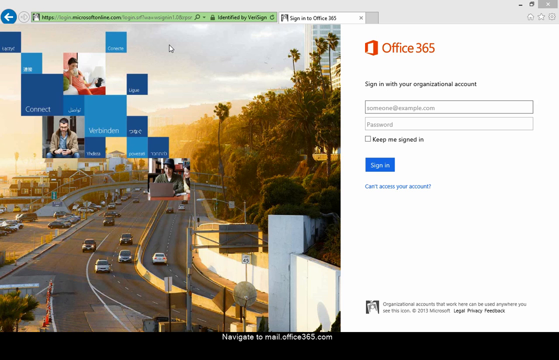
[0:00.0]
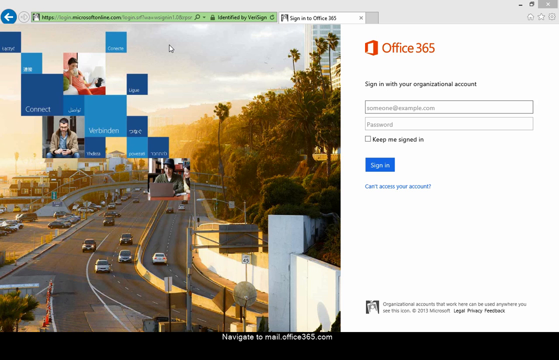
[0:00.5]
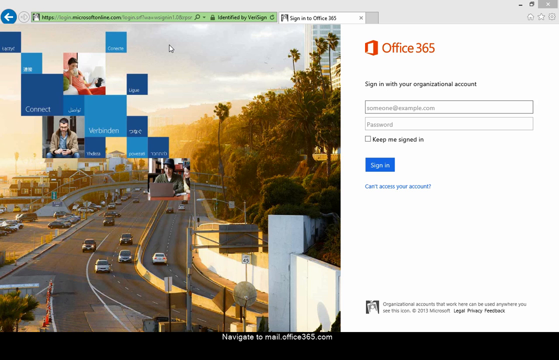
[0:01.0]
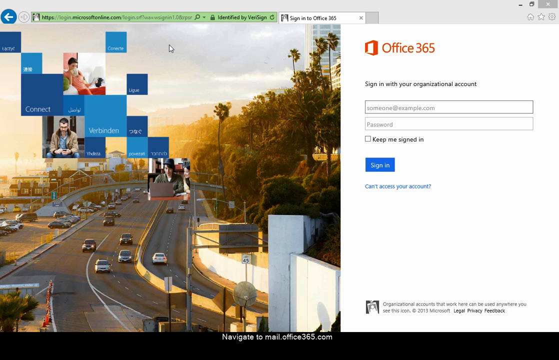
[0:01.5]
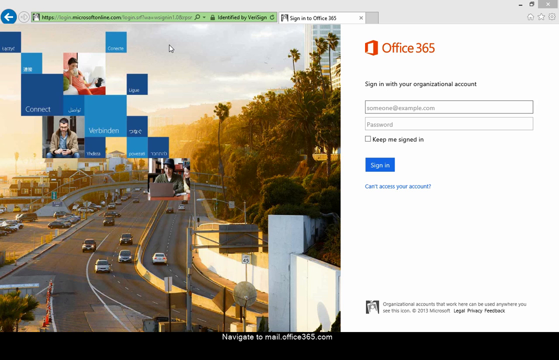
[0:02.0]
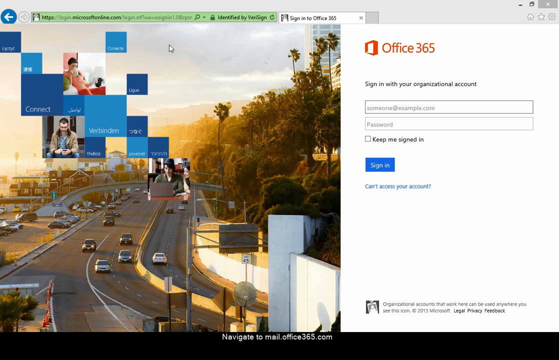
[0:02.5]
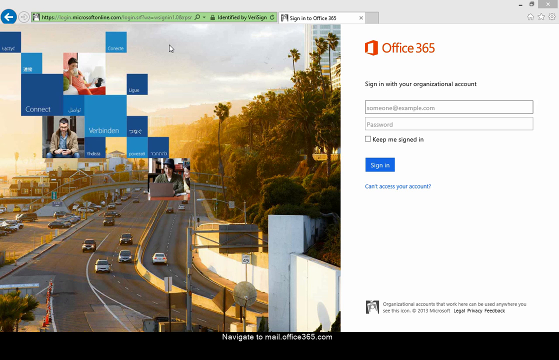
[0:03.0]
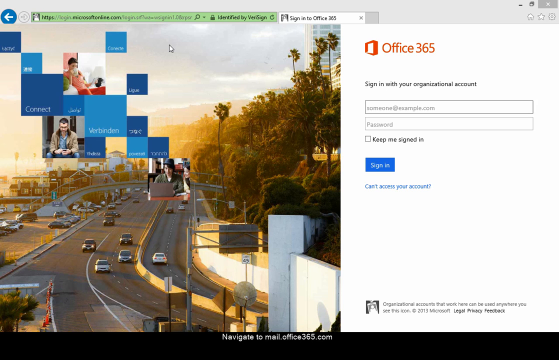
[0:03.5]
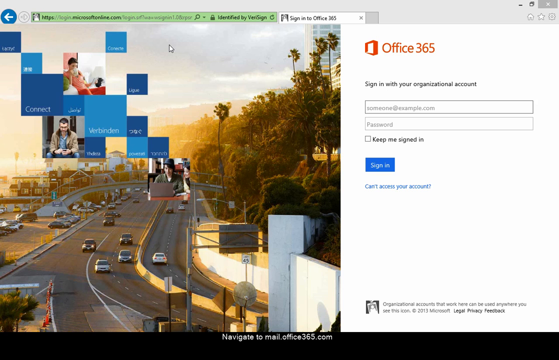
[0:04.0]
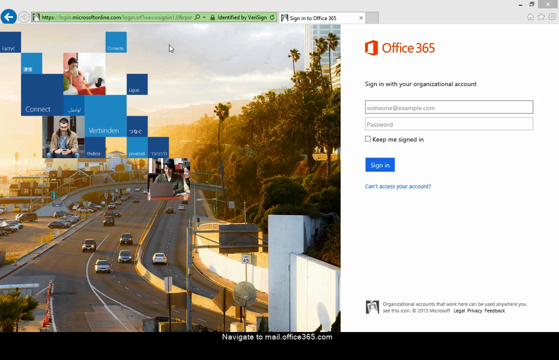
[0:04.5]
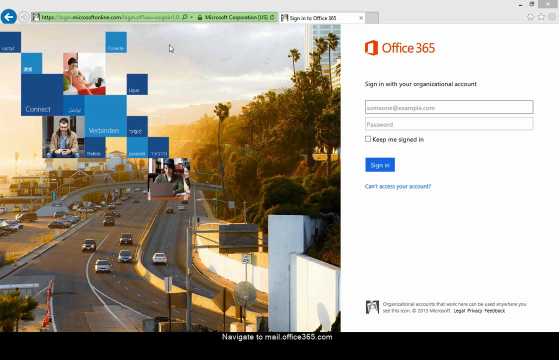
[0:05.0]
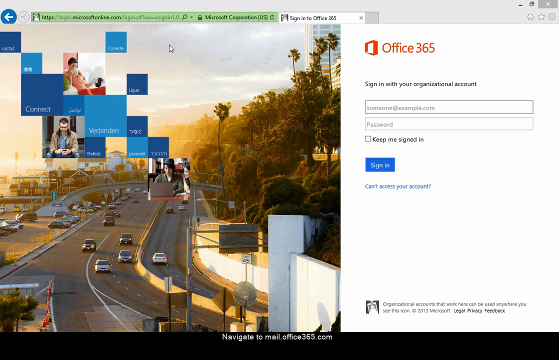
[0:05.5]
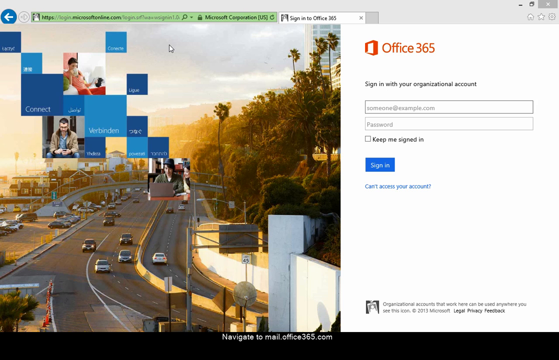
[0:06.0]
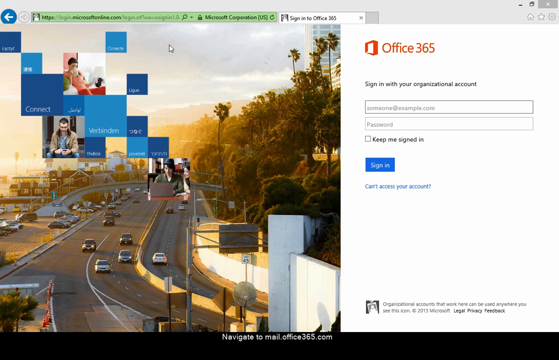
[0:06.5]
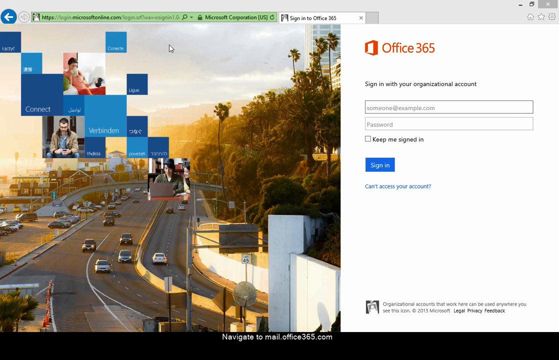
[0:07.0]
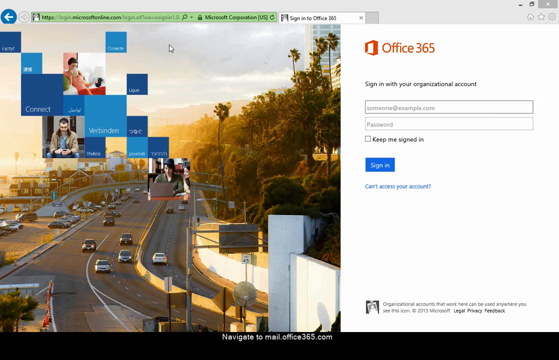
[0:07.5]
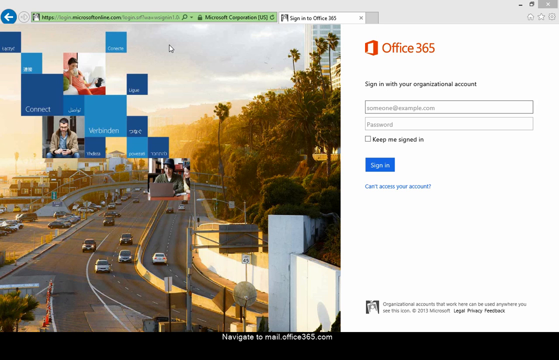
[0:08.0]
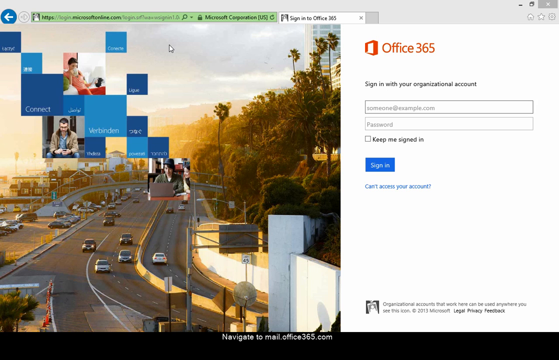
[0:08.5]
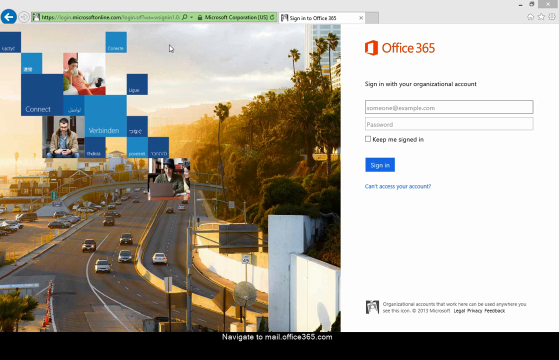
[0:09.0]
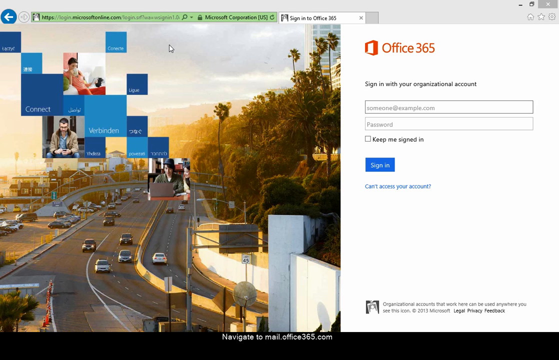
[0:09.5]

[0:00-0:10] The video opens on the Office sign-in screen, with a spot to sign in by entering an email and then a password. On the left side of the screen is a picture of something like a freeway and some blue blocks, with a woman in one block and a man in another. At the top, the website is shown in green, with a tab next to it; the second tab is for signing into Office. Over on the right are the Office symbol and "Office 365," where the sign-in takes place, along with an option to choose whether to keep the user signed in.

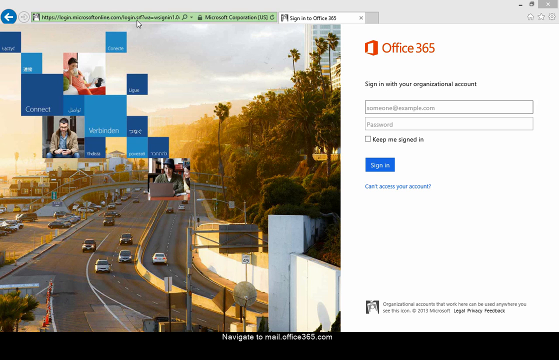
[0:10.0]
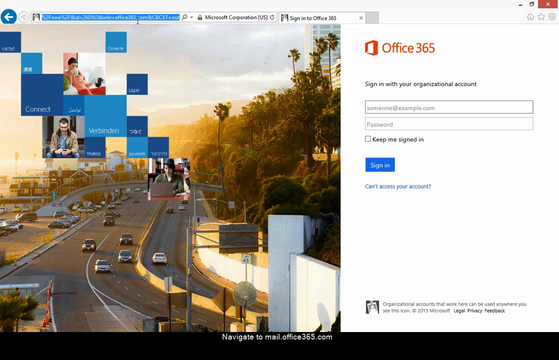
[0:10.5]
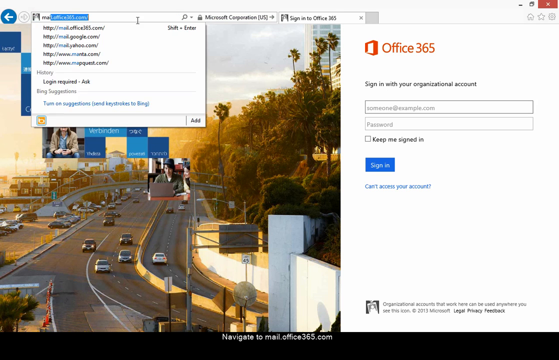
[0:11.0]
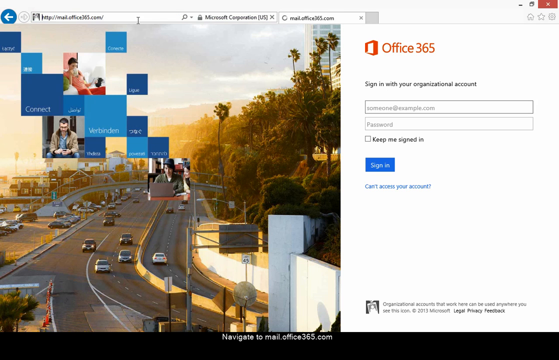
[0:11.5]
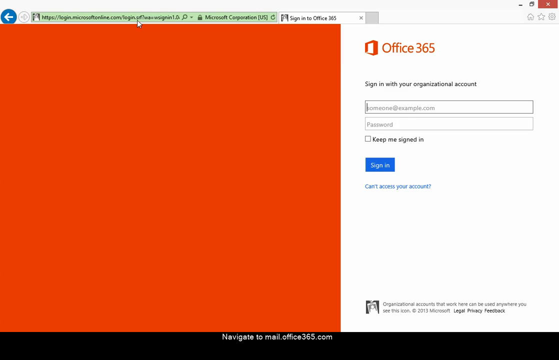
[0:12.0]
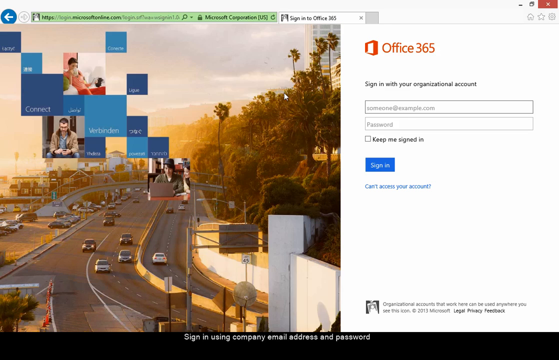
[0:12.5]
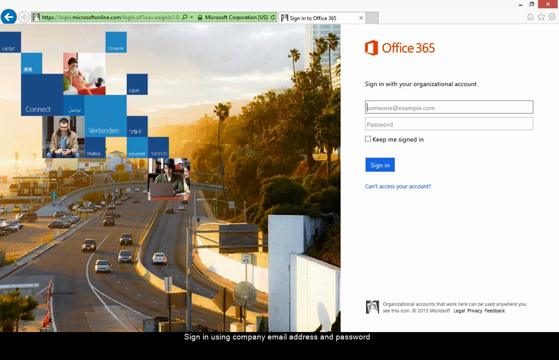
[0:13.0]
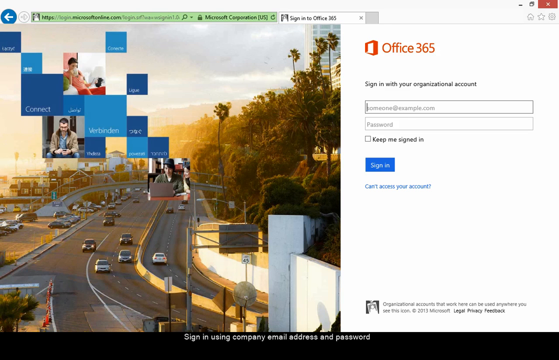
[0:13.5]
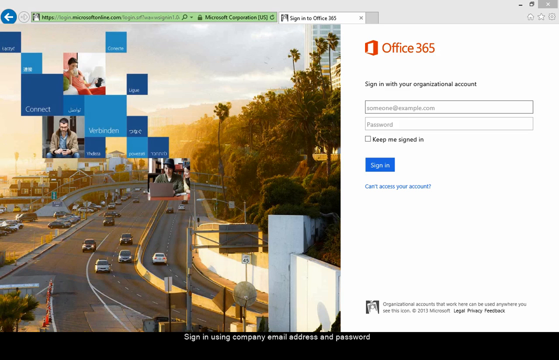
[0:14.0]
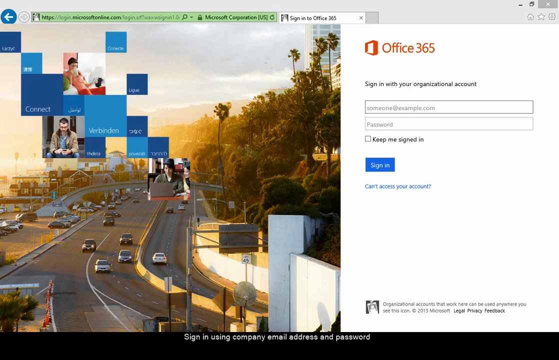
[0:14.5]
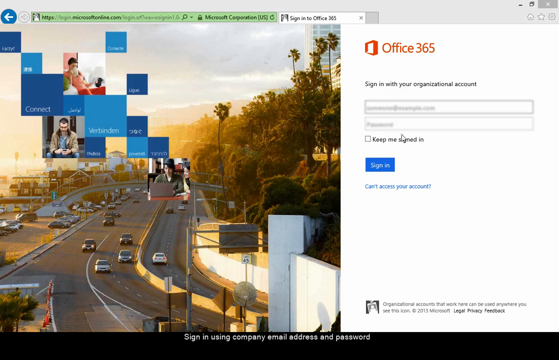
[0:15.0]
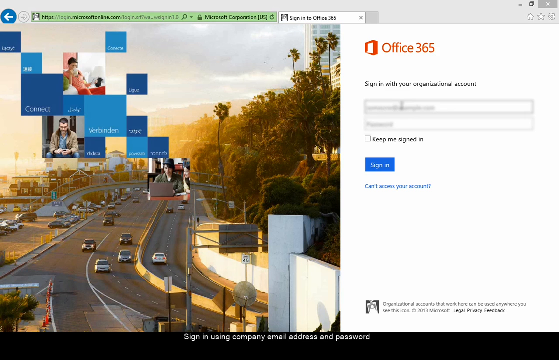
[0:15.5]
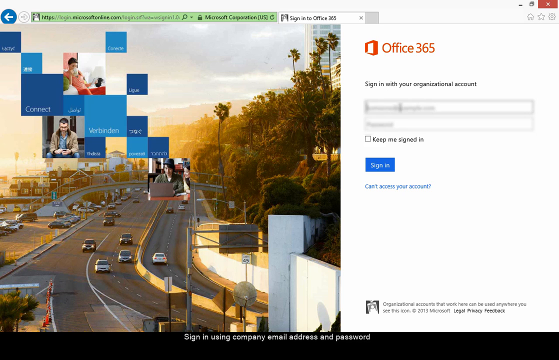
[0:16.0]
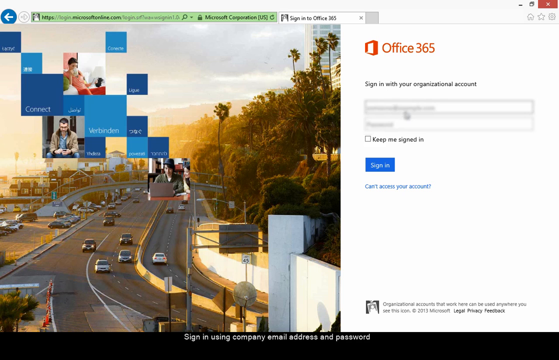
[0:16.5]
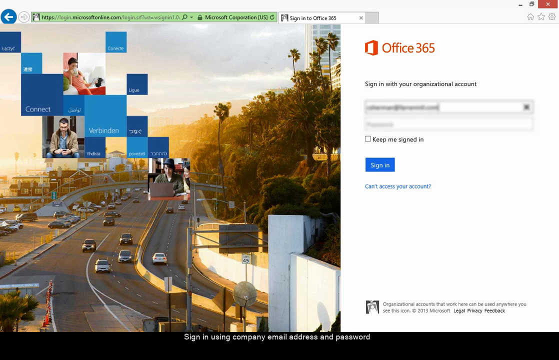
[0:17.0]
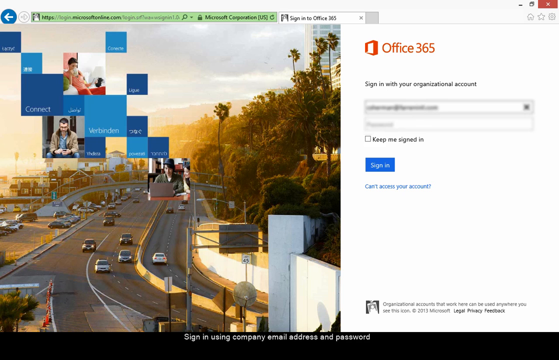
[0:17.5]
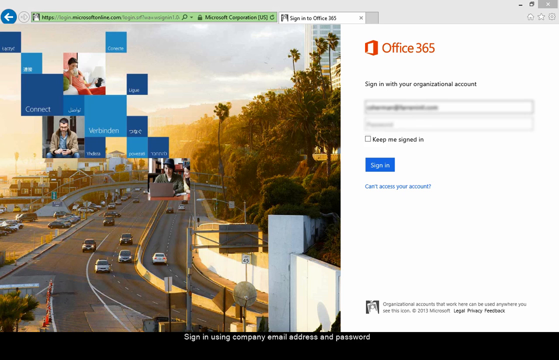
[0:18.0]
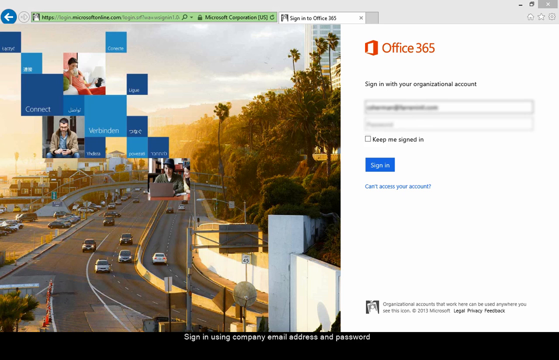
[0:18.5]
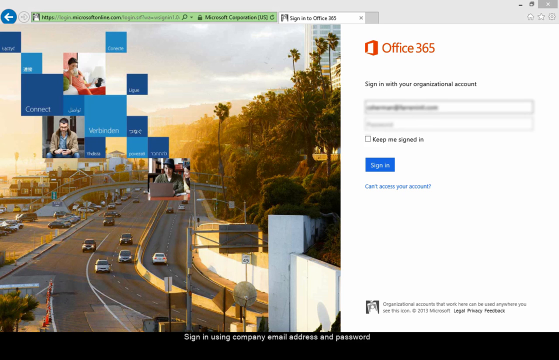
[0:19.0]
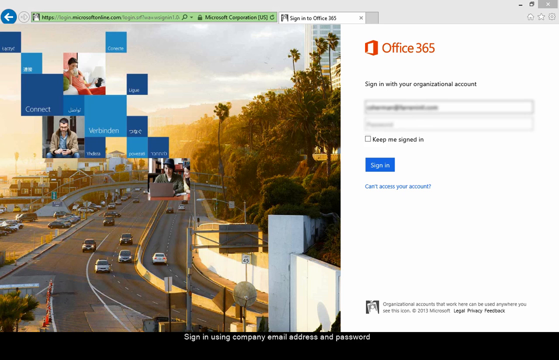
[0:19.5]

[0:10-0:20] The Office 365 sign-in page is still on screen. The user goes up to the top and apparently refreshes the website, then prepares to enter their sign-in credentials and presumably their password, though that is not shown. On the left side of the screen are still the freeway and blue boxes; in one of the boxes are a woman and a man, and a third person, a boy holding a laptop, is also visible.